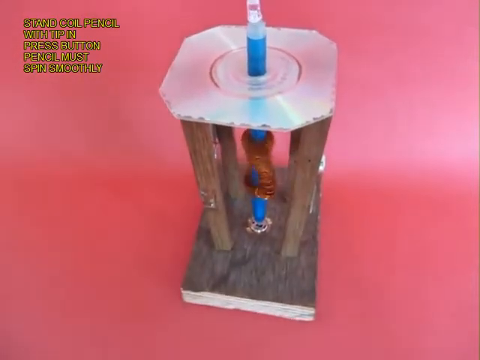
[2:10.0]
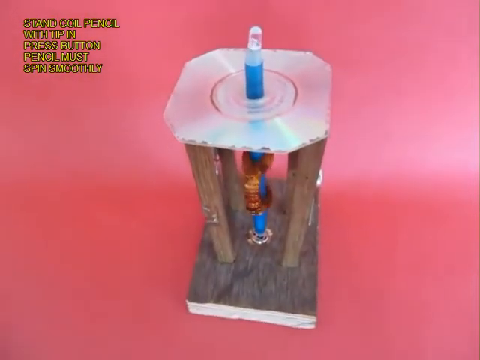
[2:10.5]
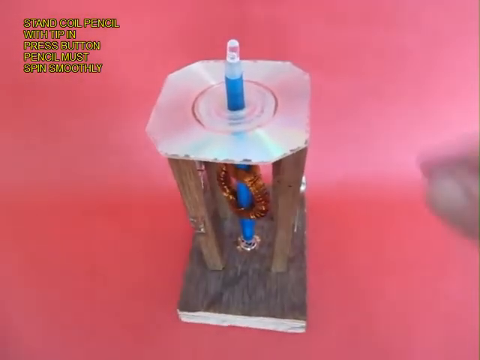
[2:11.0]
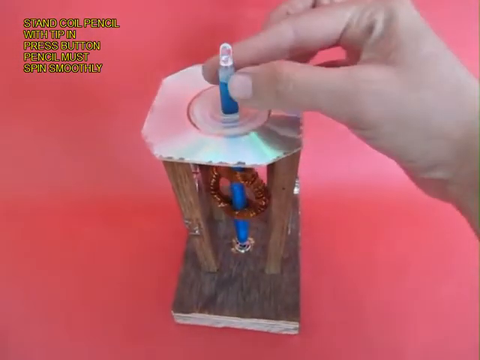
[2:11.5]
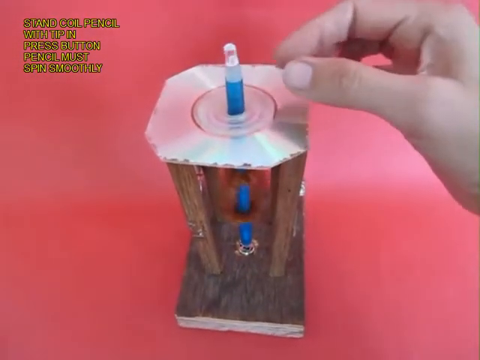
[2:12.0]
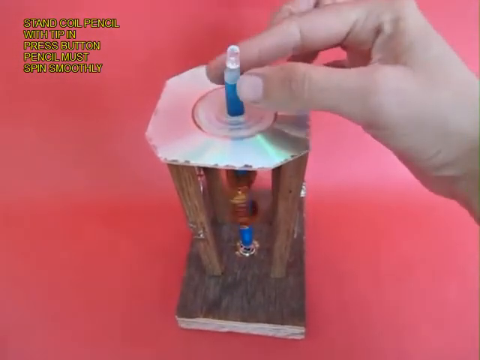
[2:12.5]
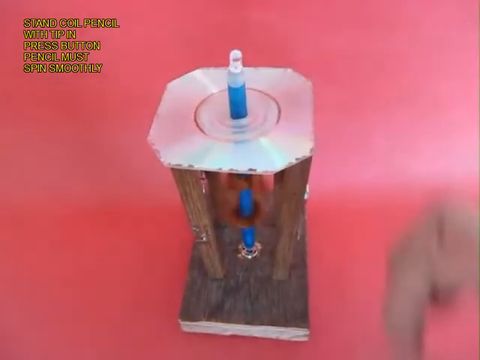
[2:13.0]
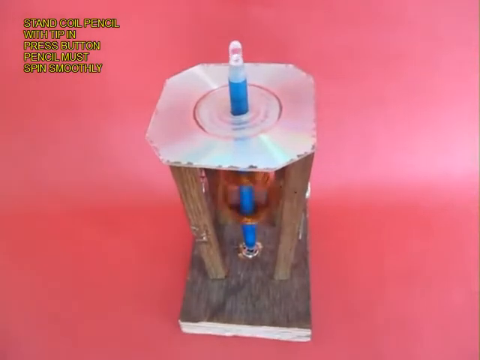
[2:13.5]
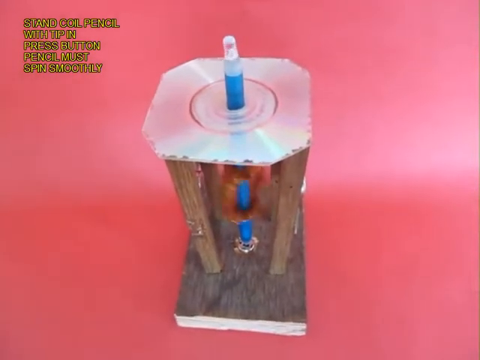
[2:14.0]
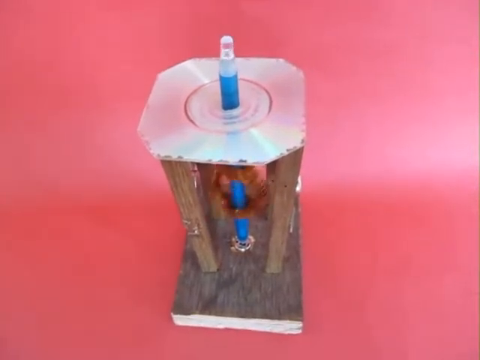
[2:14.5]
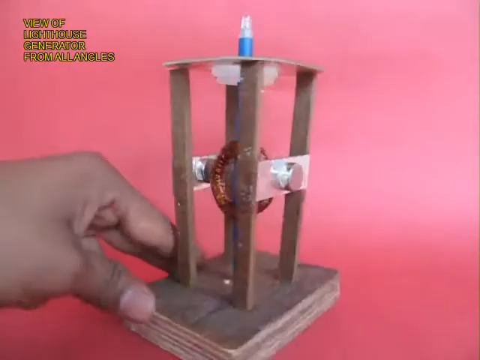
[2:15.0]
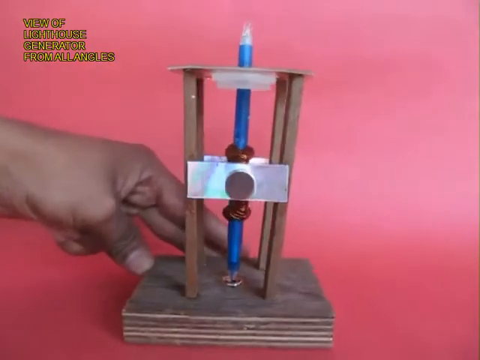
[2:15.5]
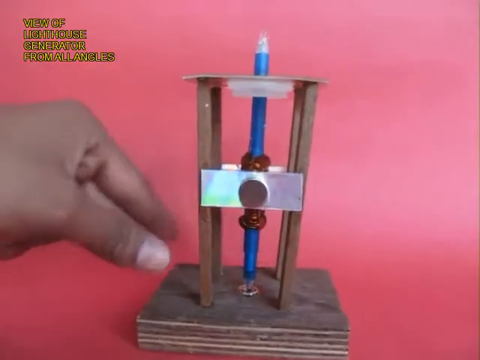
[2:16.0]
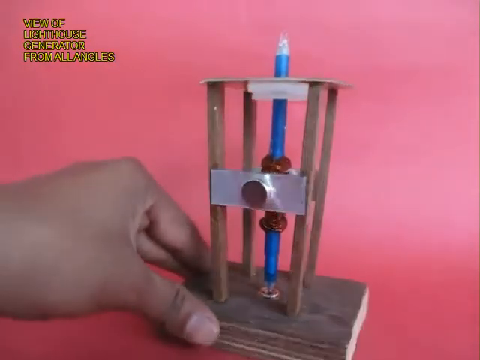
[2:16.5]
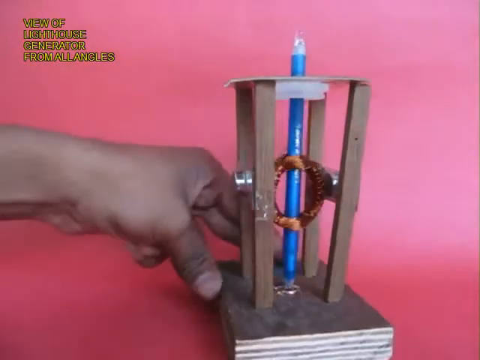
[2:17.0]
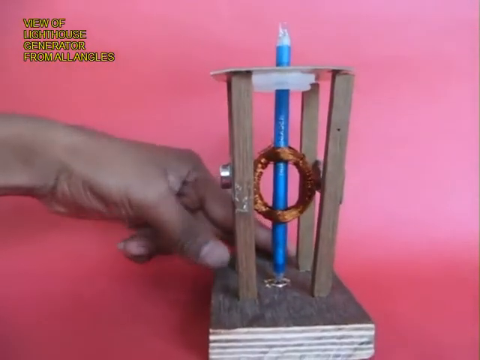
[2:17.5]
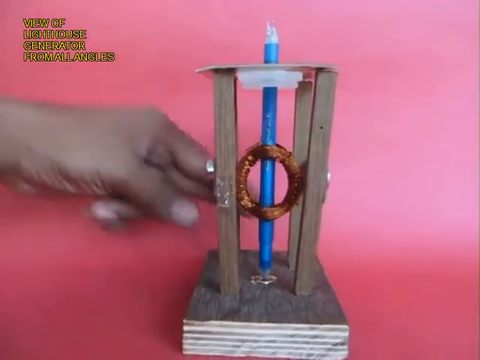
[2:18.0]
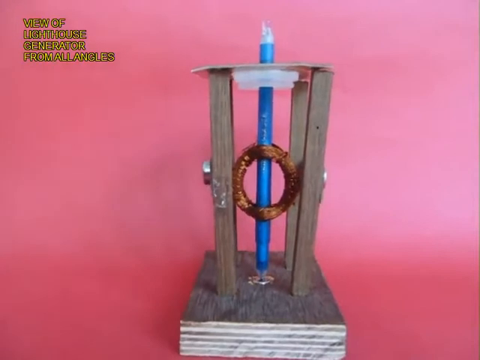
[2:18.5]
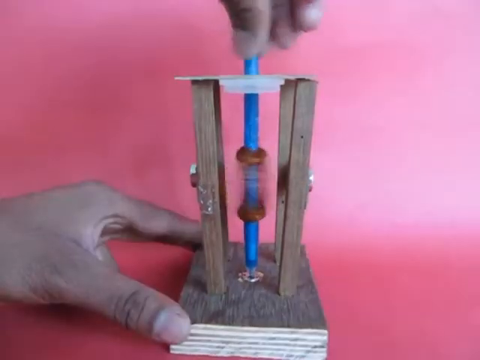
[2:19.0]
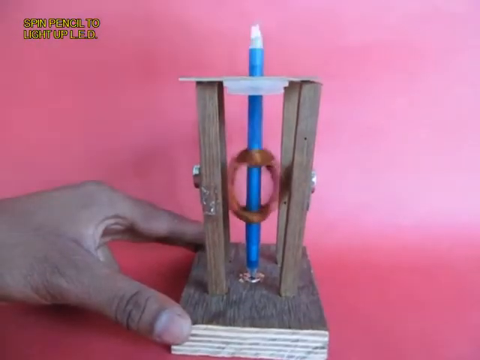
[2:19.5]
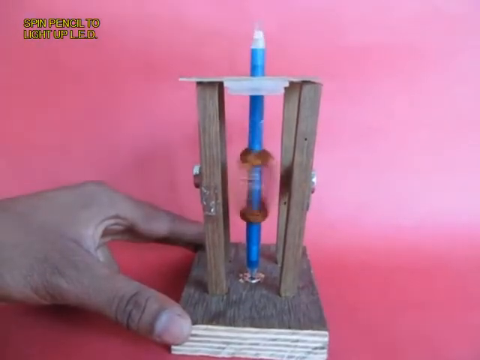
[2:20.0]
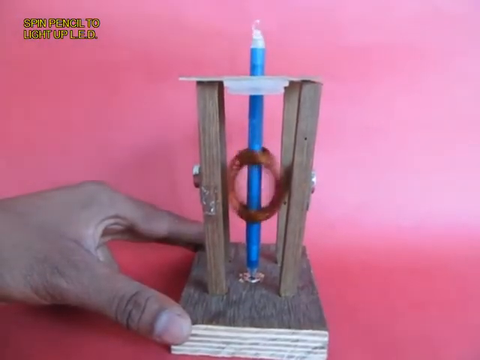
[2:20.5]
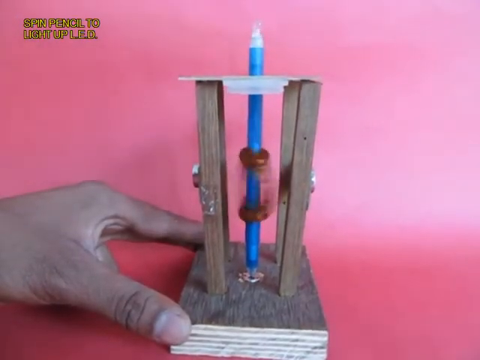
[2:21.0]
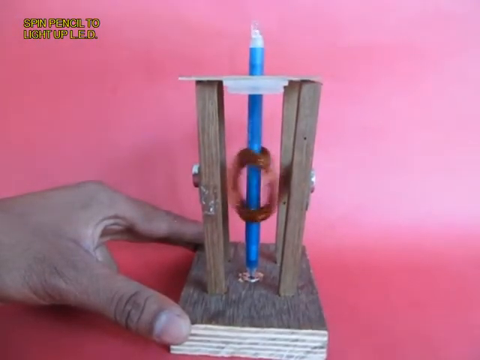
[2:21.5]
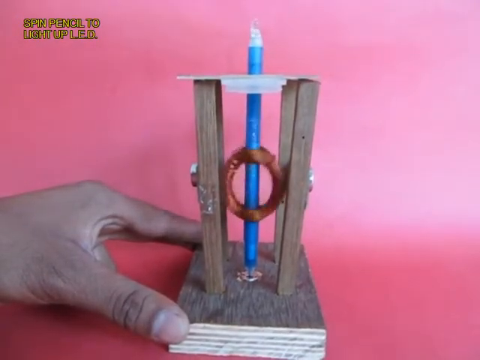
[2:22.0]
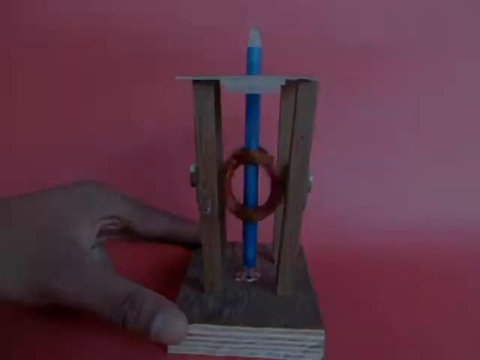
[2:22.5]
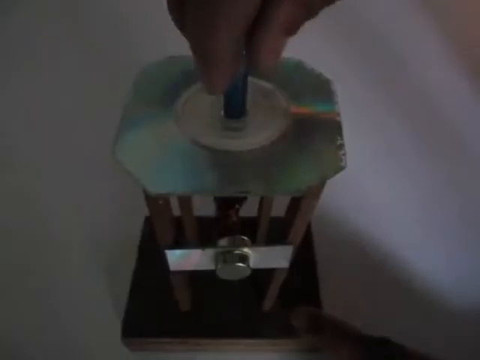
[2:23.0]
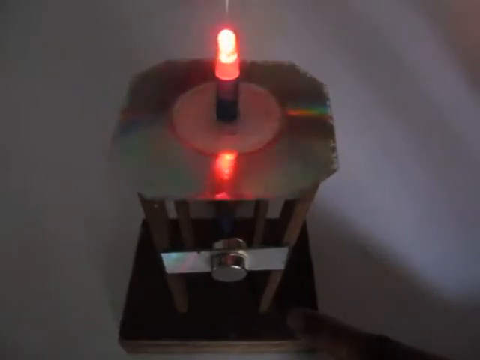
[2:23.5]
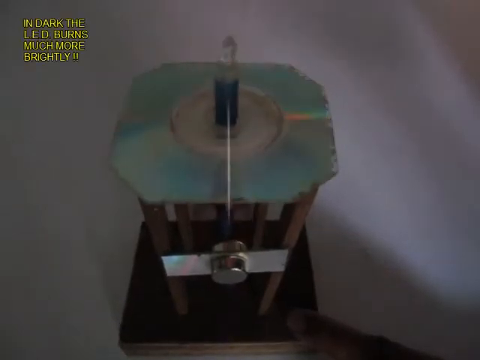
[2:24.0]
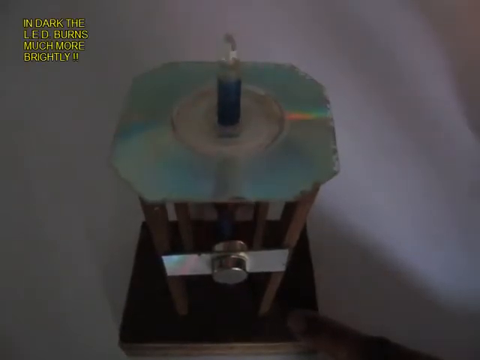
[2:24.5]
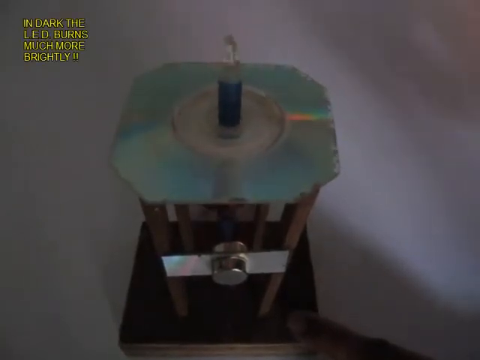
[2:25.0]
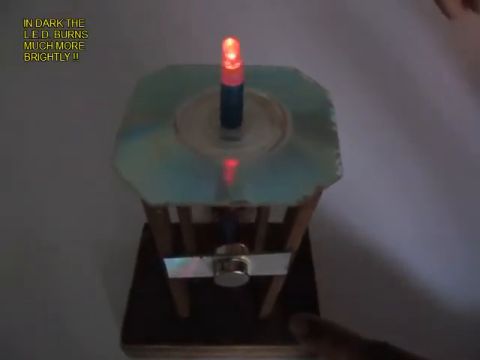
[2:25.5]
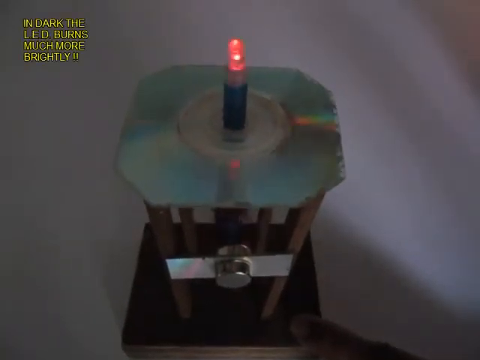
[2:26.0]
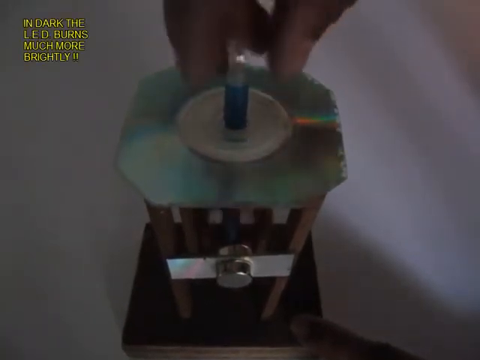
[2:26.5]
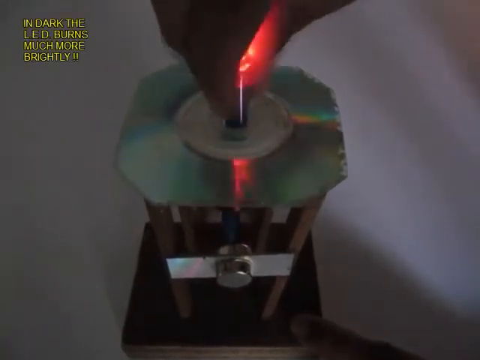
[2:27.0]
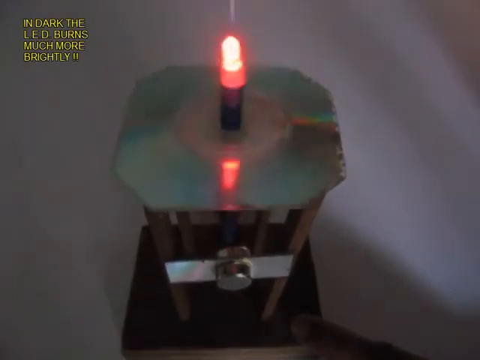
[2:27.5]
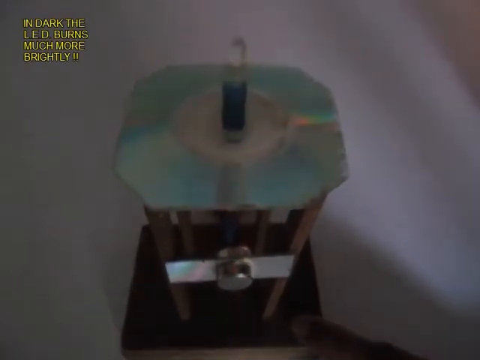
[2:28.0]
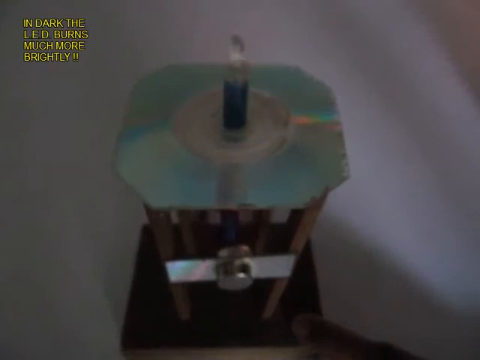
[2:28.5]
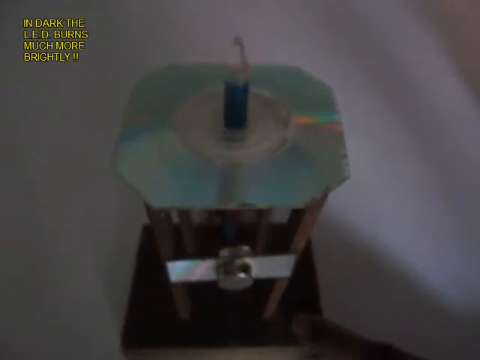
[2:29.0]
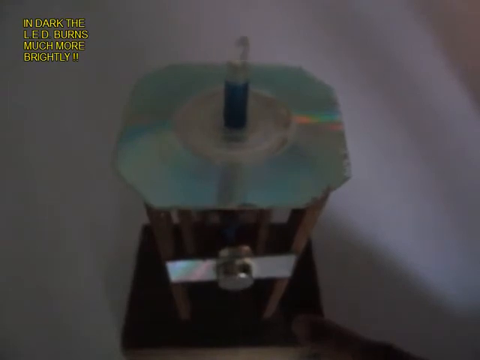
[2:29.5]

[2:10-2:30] The right hand comes into frame, grabs the top of the ballpen, and keeps twisting it so it spins very fast on the red table. The right hand leaves the frame while the blue ballpen continues to spin very fast. In a new shot, the left hand turns the wooden table clockwise toward the right so the ballpen can be seen without the magnets in the way, then begins to spin the ballpen. The setting changes to a white table in a much darker, unlit environment. The tower appears with the ballpen spinning, and this time the LED light turns on and blinks. The right hand comes into frame and keeps spinning the ballpen very fast.